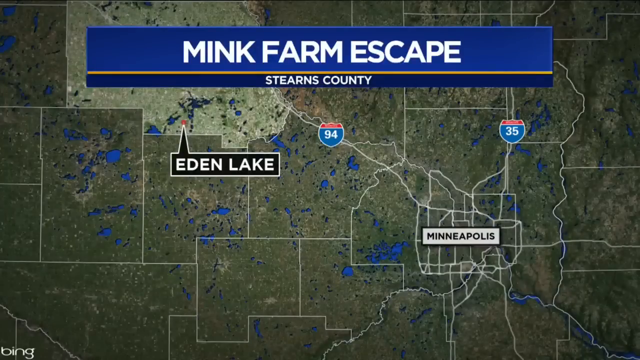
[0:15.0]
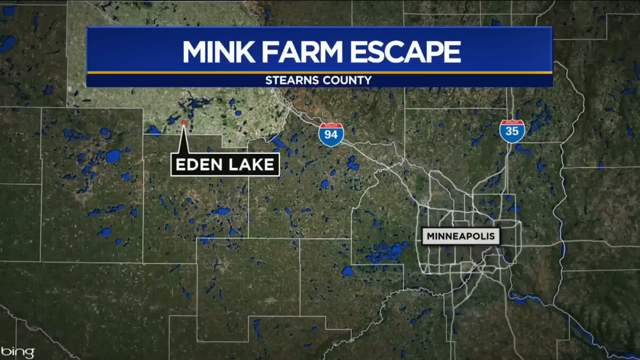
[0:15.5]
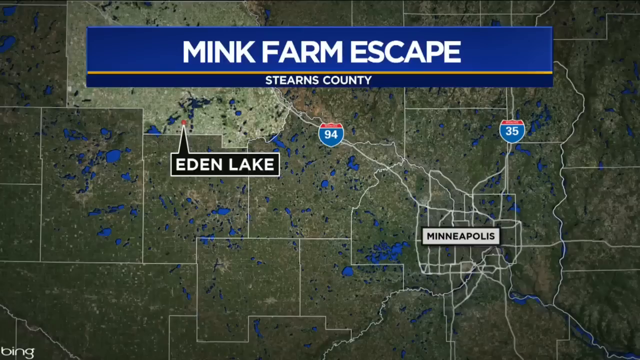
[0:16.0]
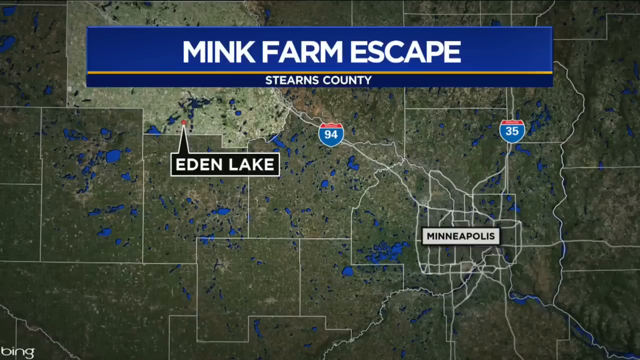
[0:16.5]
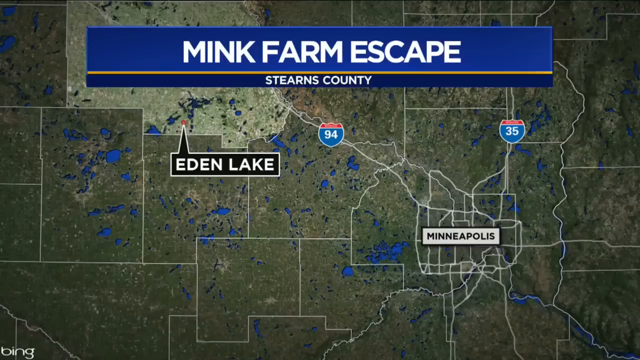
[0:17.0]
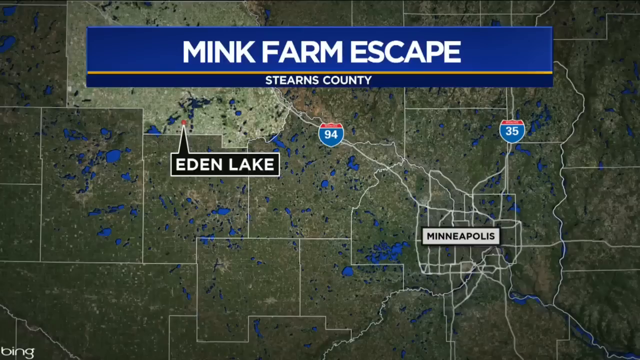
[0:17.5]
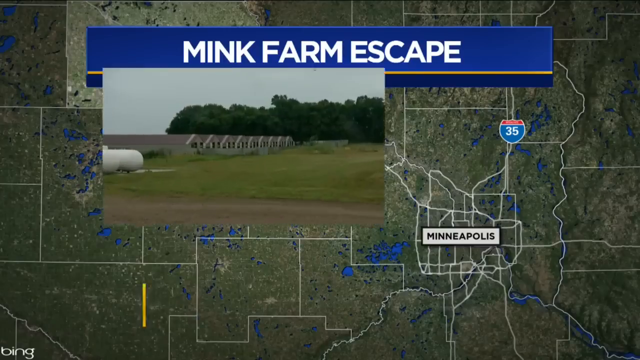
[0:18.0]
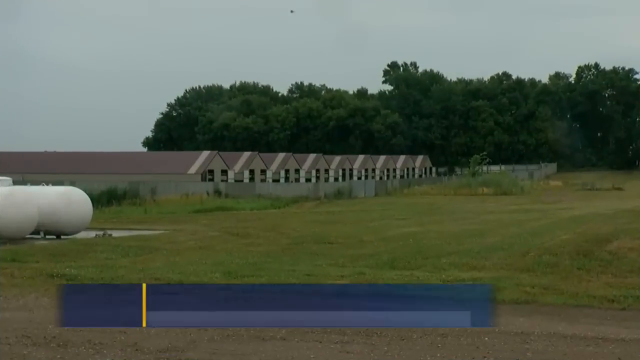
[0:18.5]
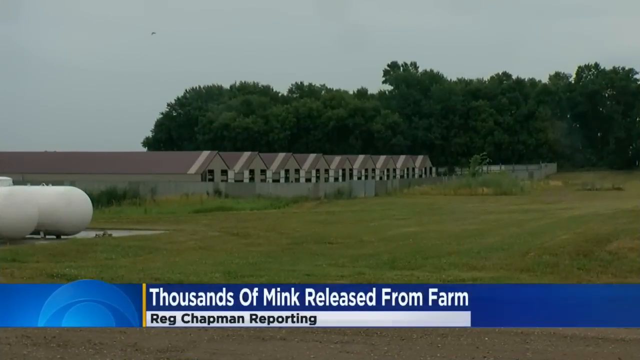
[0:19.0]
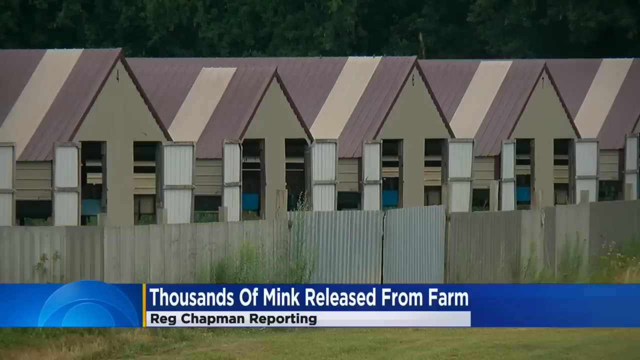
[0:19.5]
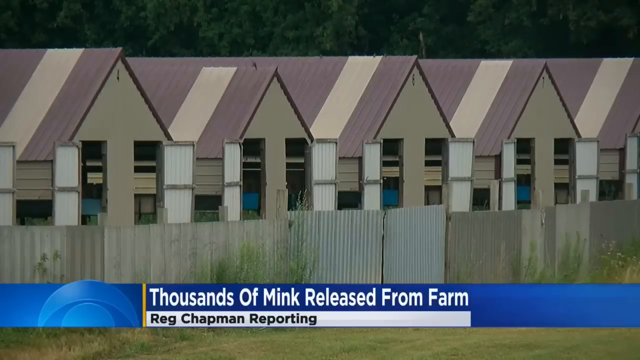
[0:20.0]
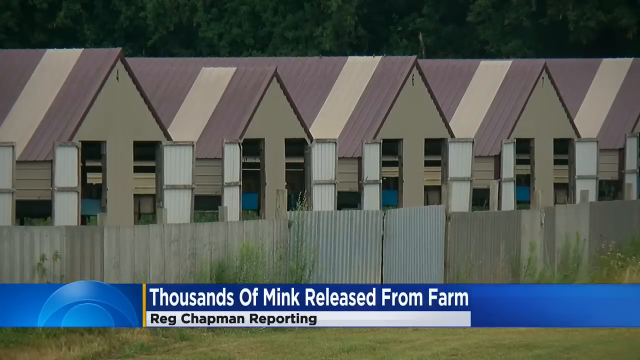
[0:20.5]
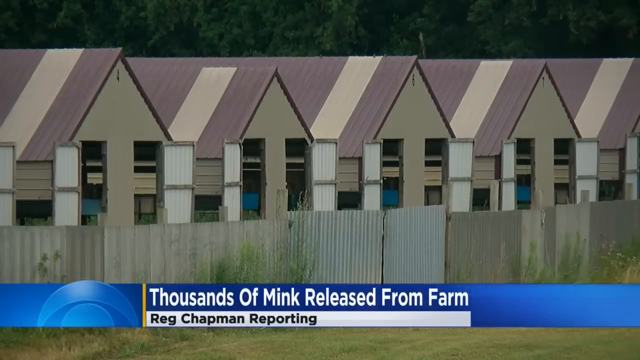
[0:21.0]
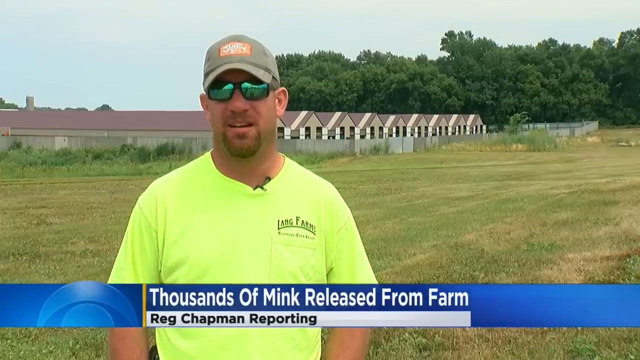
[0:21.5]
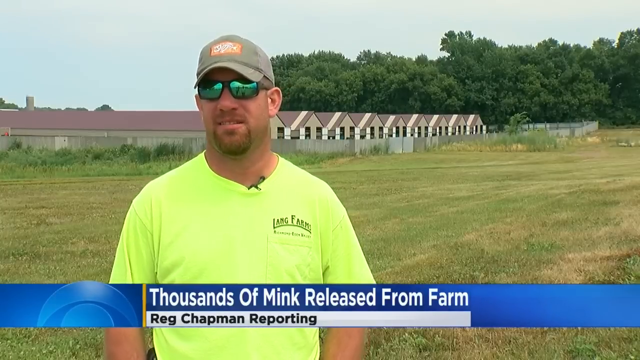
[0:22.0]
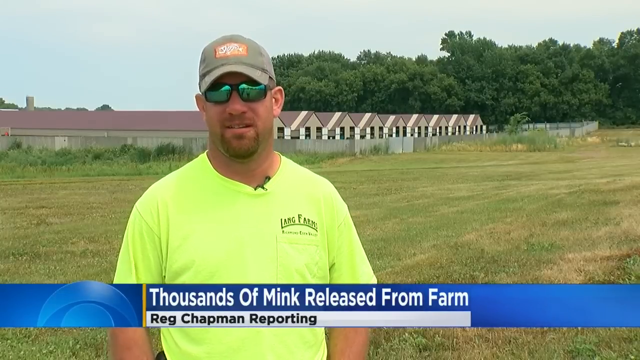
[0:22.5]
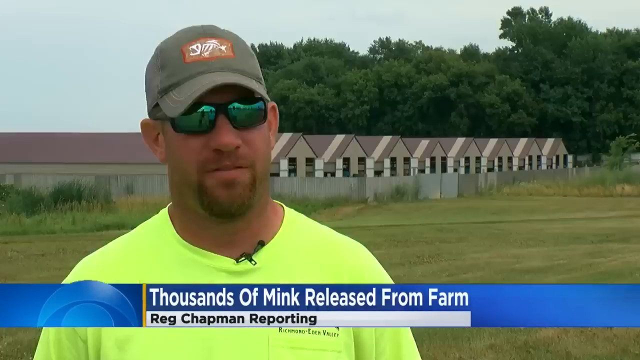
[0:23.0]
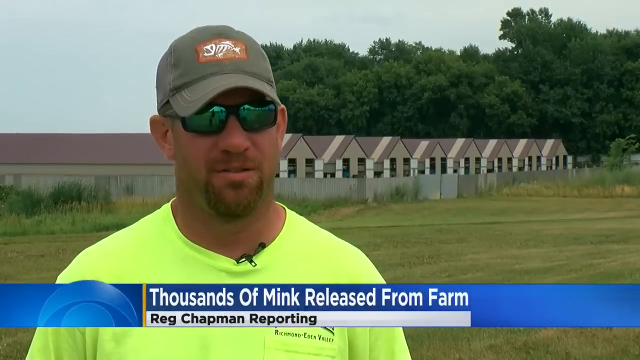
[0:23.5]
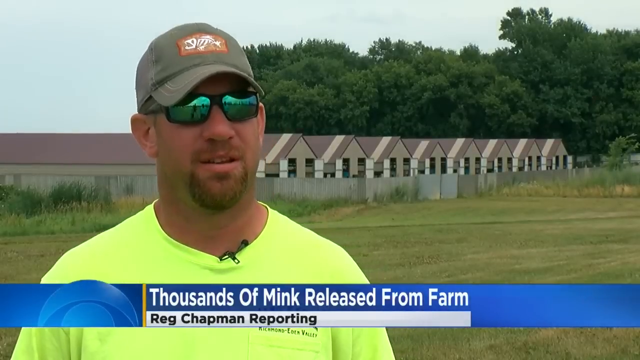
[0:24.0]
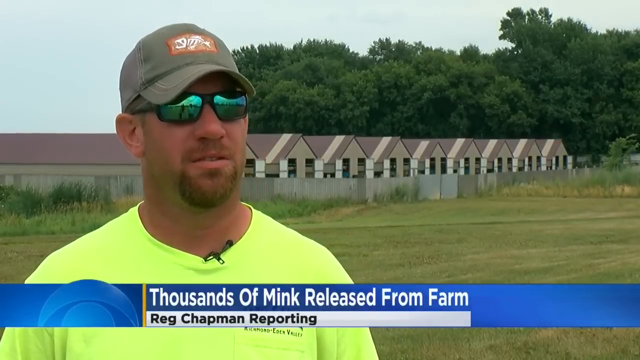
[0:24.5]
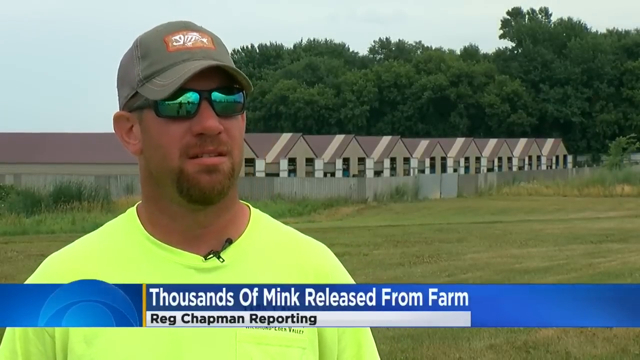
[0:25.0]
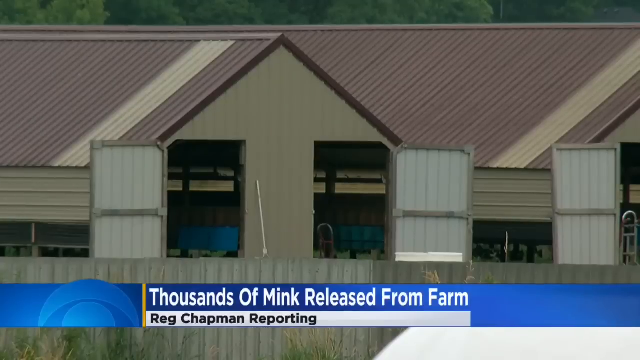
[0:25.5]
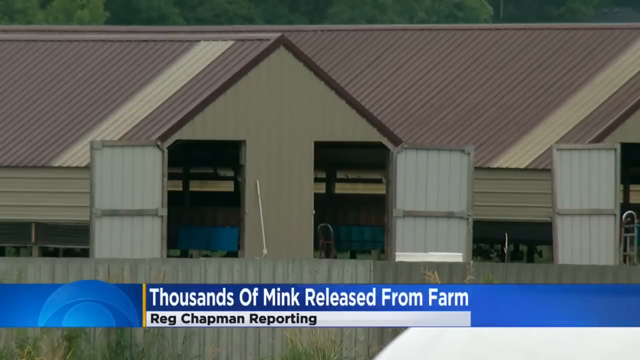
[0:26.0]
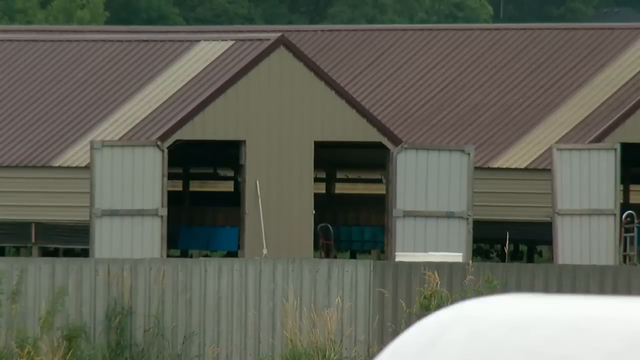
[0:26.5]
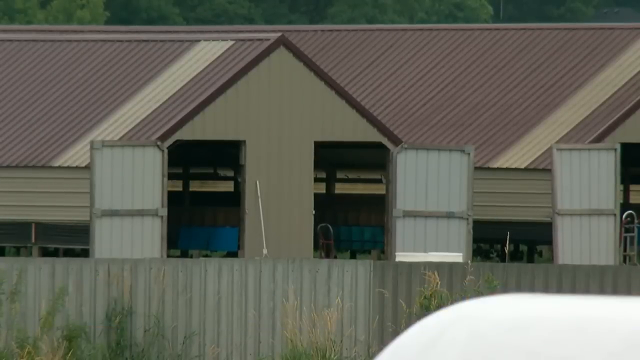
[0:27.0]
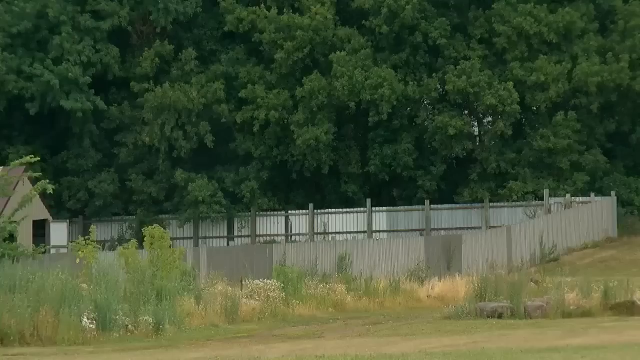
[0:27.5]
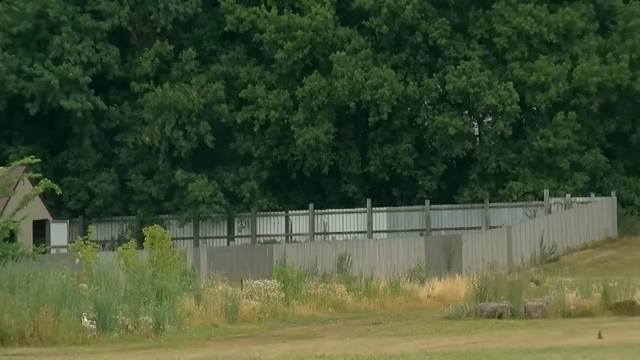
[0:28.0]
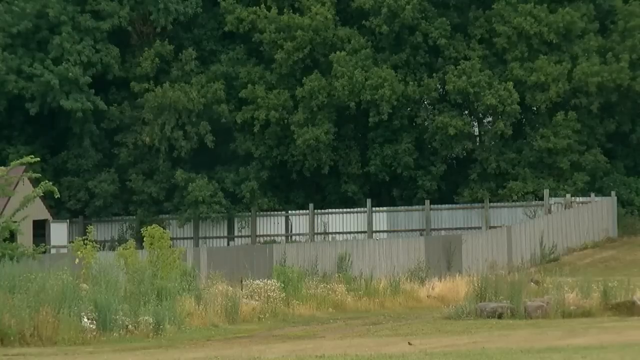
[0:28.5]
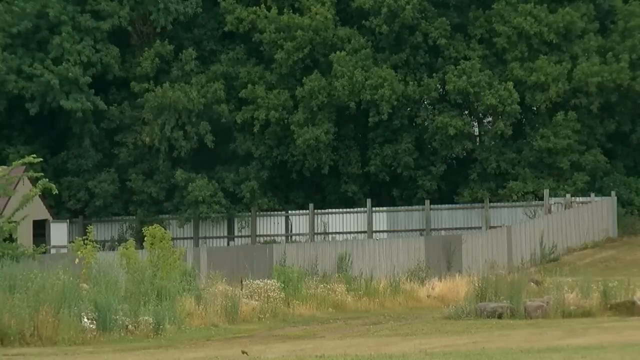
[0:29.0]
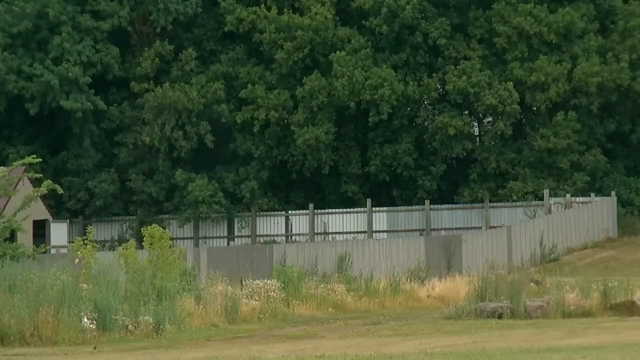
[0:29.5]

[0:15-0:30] The map of Minnesota appears with the mink farm escape banner at the top and the marker at Eden Lake, apparently where the escape happened. A fade transition leads to what appears to be the farm: 10 buildings lined up in a row, all fenced in, with some large tankers off to the left. Behind the buildings there is a tree line of forested area, but otherwise the land is flat and manicured, apparently mowed, with some shrubbery around the edge of the fence. Text on screen reads "thousands of mink released from farm" along with "Reg Chapman reporting." A closer shot shows what are apparently coops or housing facilities for the minks. A man is then interviewed: a white man with a goatee, wearing a bright green shirt with a pocket that says "Lang Farms," blue-tinted sunglasses, and some sort of dad cap with a dead fish on it. He is talking.